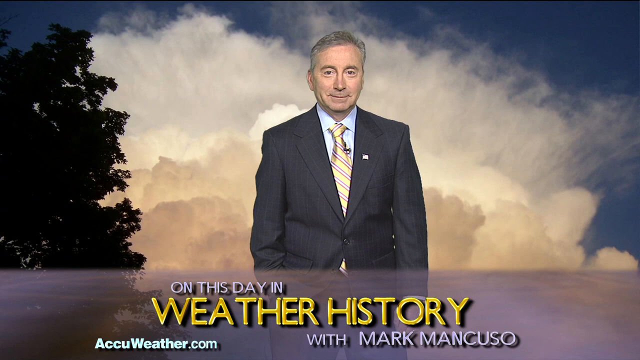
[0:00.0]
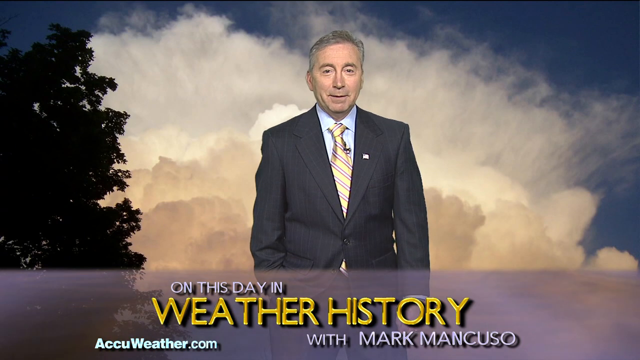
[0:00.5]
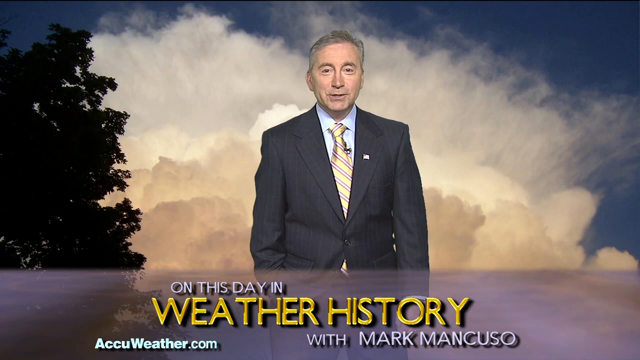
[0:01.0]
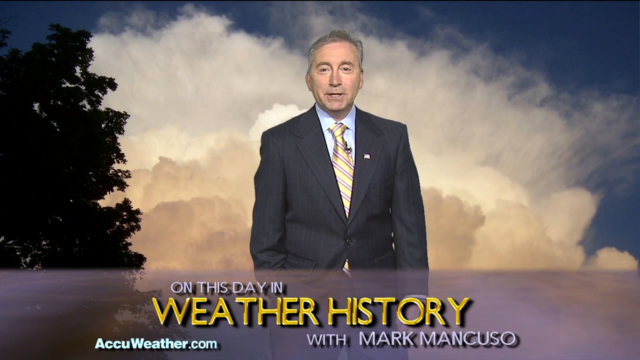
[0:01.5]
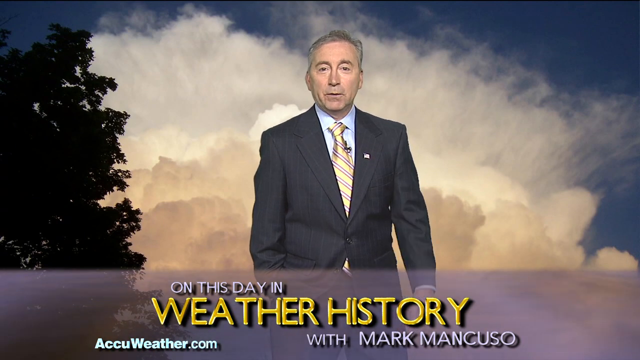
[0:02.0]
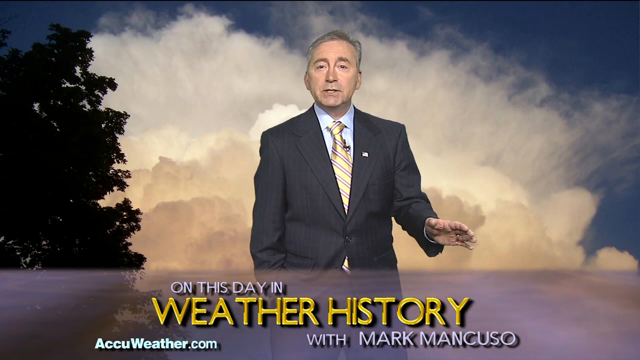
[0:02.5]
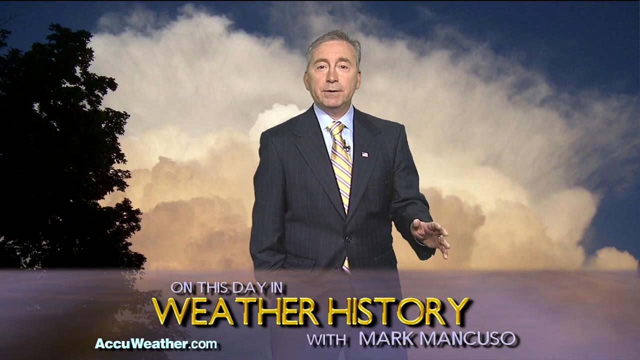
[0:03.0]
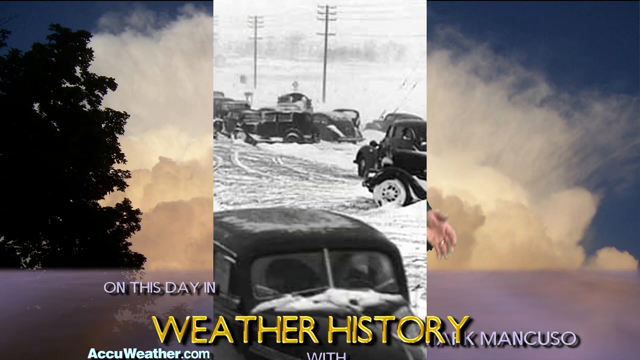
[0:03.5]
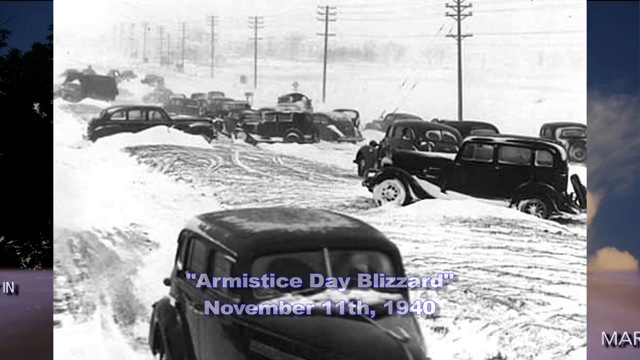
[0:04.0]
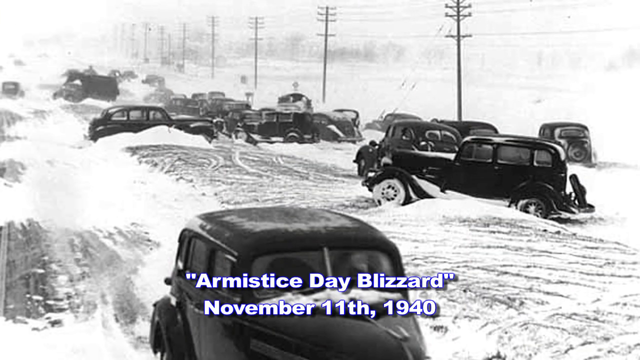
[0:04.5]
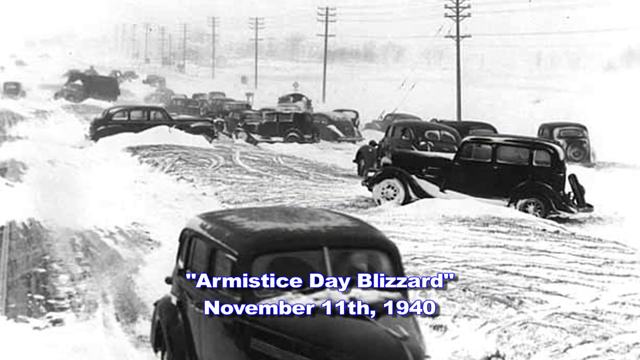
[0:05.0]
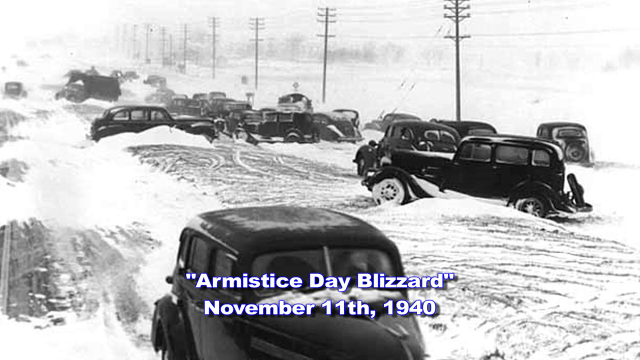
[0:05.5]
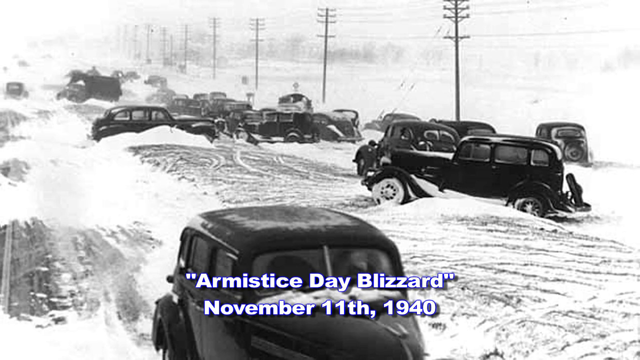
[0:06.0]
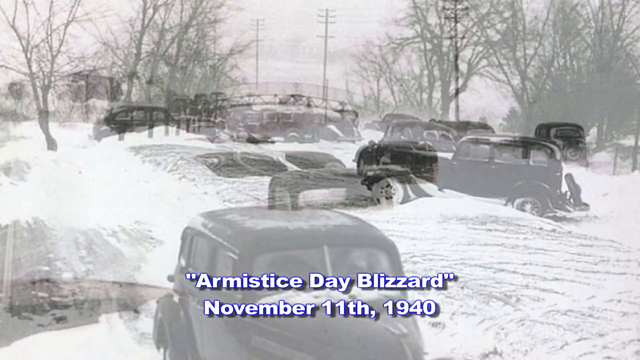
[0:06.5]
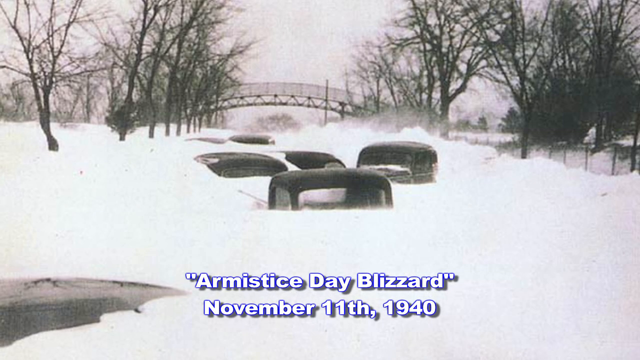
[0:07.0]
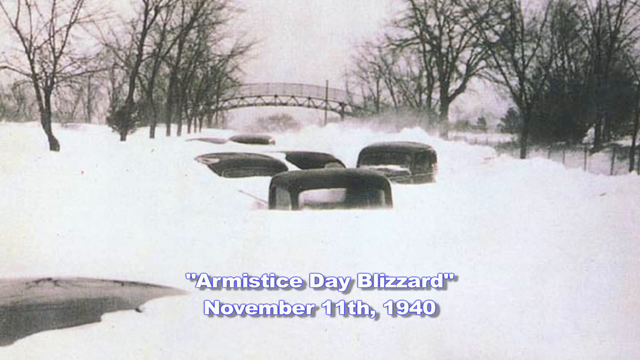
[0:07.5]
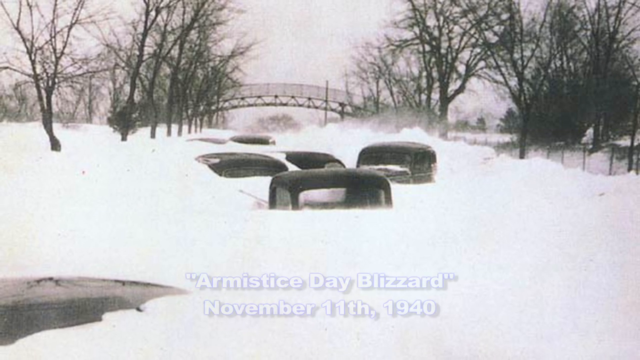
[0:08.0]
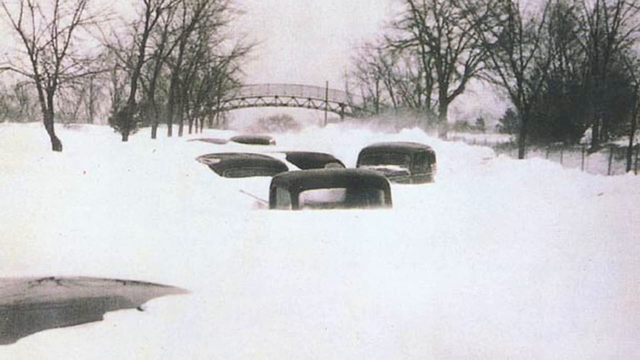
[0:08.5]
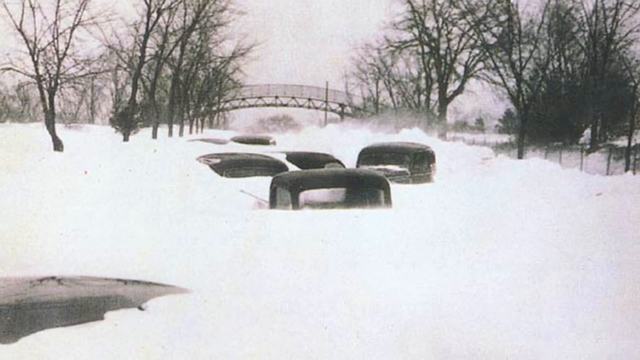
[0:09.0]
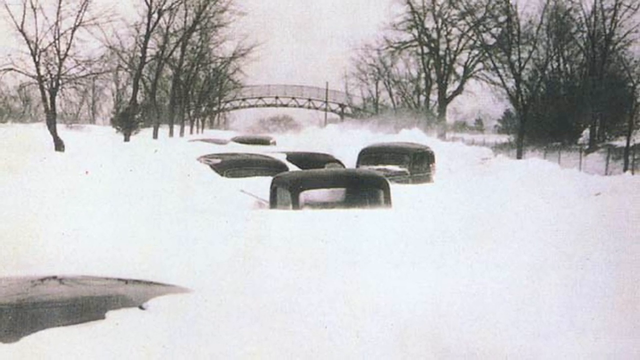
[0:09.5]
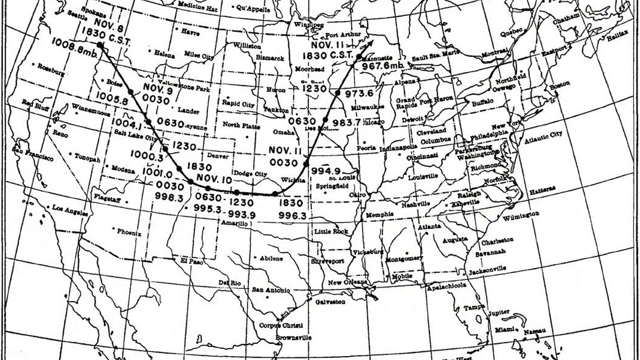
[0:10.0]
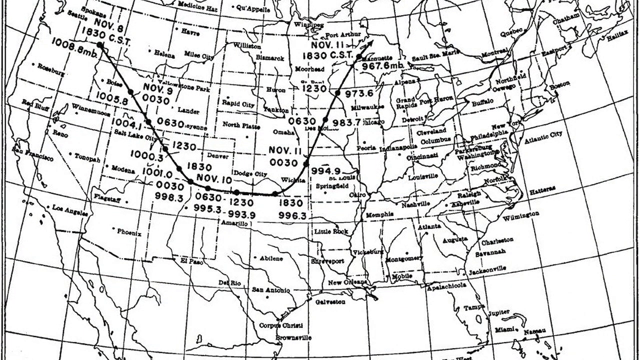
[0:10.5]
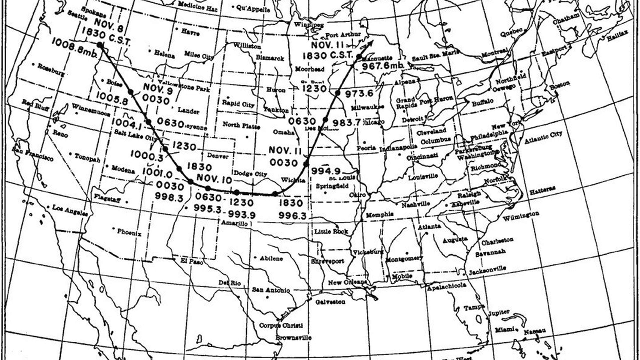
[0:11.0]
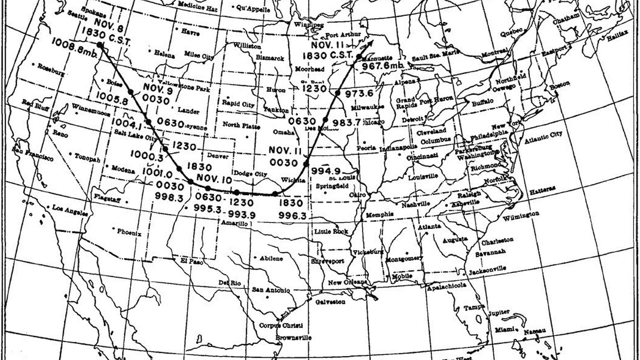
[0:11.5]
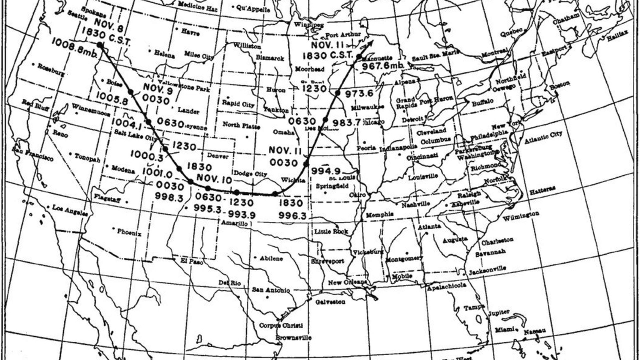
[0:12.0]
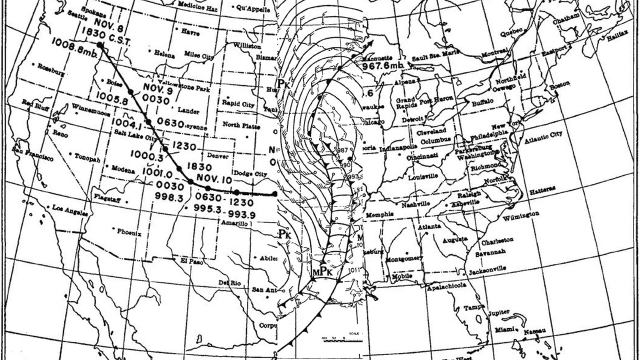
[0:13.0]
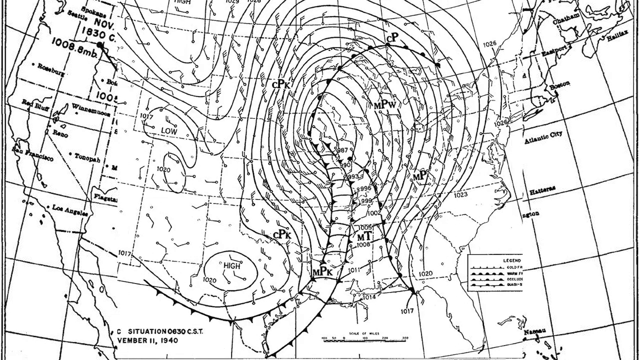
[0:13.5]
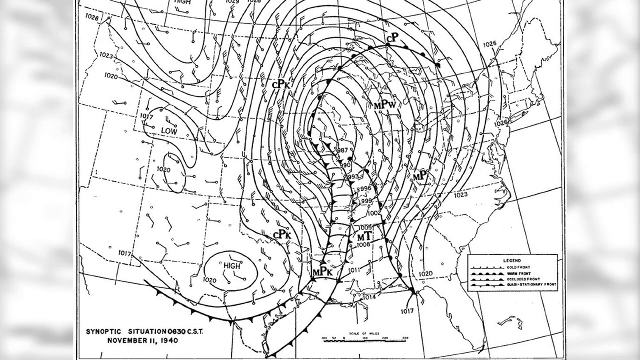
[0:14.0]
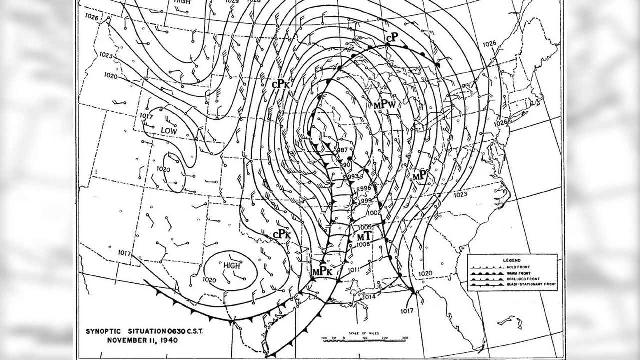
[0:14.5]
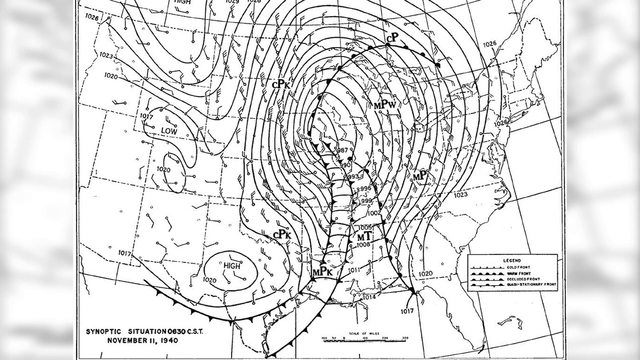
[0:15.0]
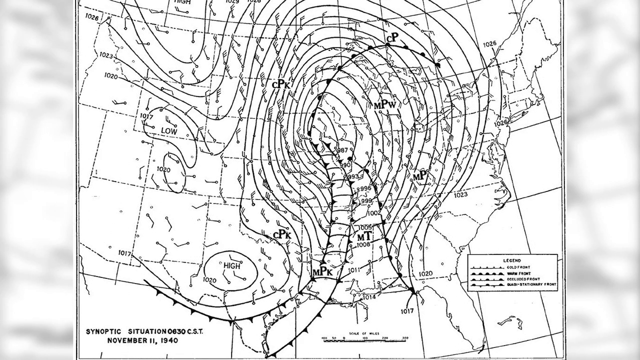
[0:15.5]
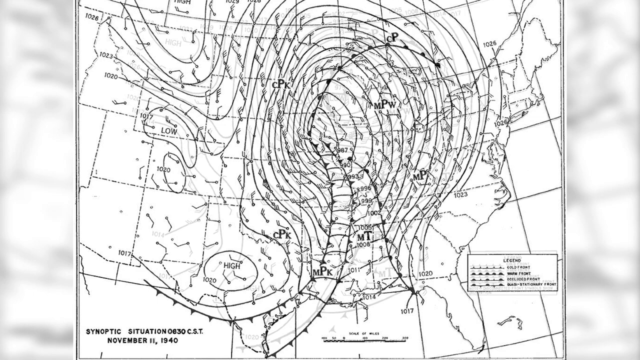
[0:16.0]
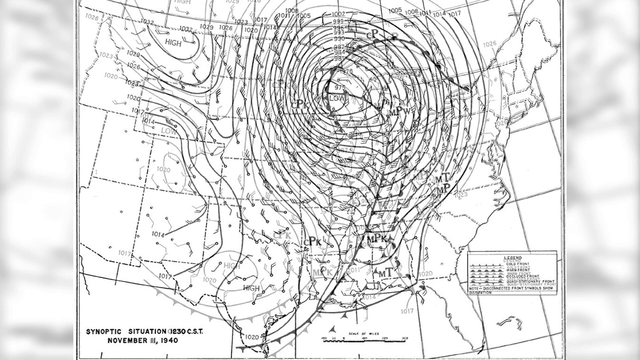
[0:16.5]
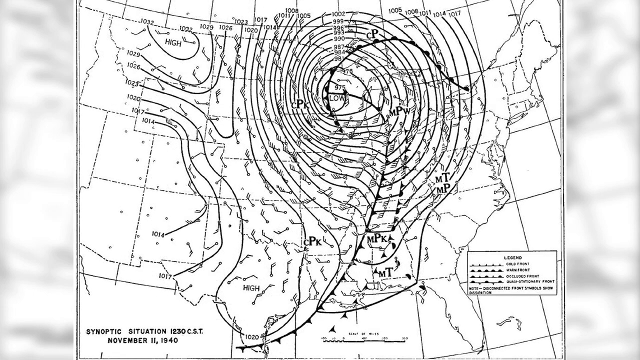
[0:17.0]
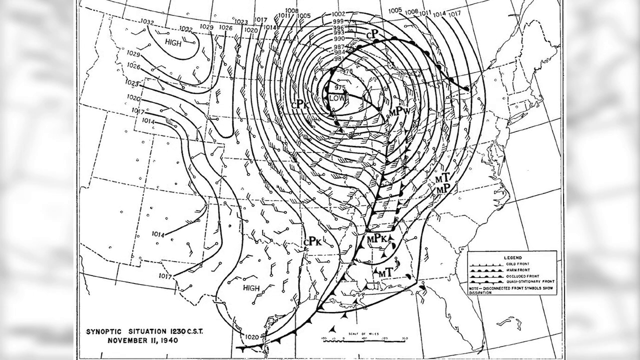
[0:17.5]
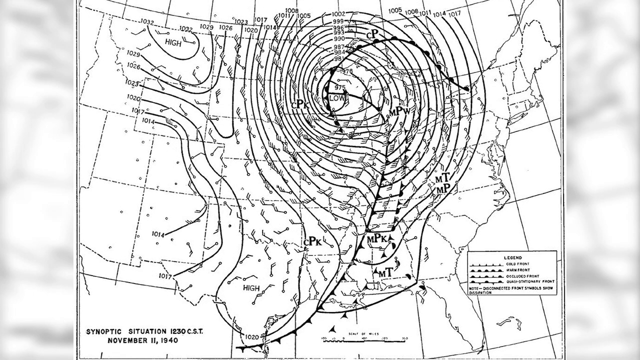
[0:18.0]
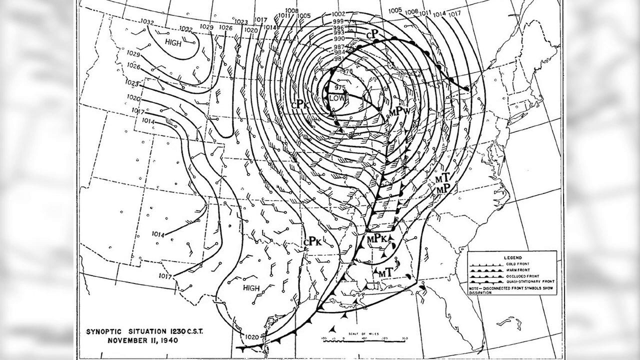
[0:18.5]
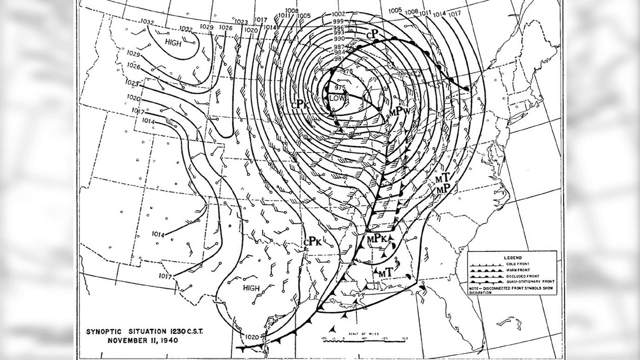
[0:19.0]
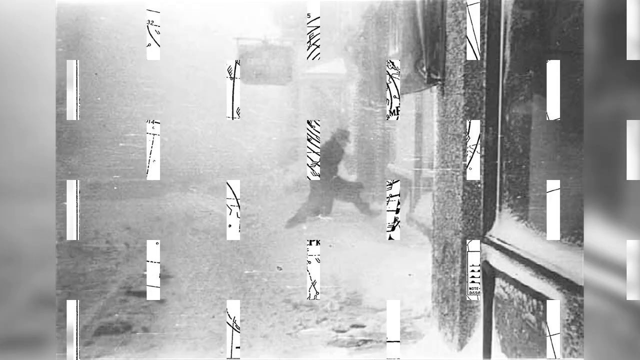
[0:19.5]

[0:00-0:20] A man stands in front of a green screen that shows a sky backdrop. The sky is largely blue, and it appears to be a little later in the evening, as there is an almost orange tint to the large plumes of clouds. On his right side is a large coniferous tree that also takes up a portion of the screen in the background. The man appears to be somewhat older, perhaps in his 50s, with short, neatly combed gray hair parted and swept to his right. He is smiling and wears a poorly fitted suit that appears to be very dark blue, or perhaps black, with a blue undershirt and a gold tie with a blue and white horizontal stripe across it. At the bottom of the screen, large text reads "On This Day in Weather History." The AccuWeather.com URL is at the bottom left, along with a subheader that reads "With Mark Mancuso," presumably the host of the segment, the man in the suit. He begins speaking to the camera with his right hand in his pocket and his left hand gesturing. A black and white photo appears showing many much older cars in the street at various angles; they all appear to be unmanned and possibly abandoned. Text appears at the bottom of the screen reading "Armistice Day Blizzard, November 11, 1940." Various images appear slowly on screen showing cars buried under snow so that only the tops of their hoods are visible. An image of a map of the United States at the time shows what appears to be the direction of some kind of polar storm, followed by a second map showing its drastic and disastrous effects.